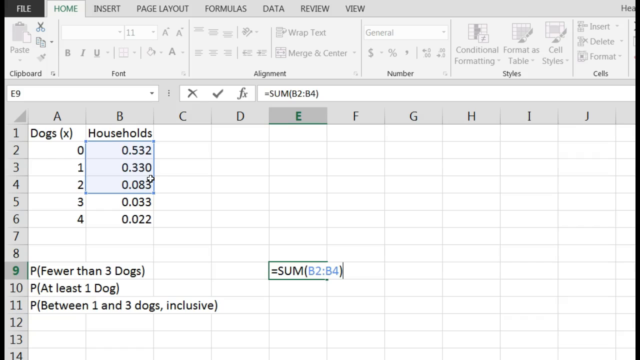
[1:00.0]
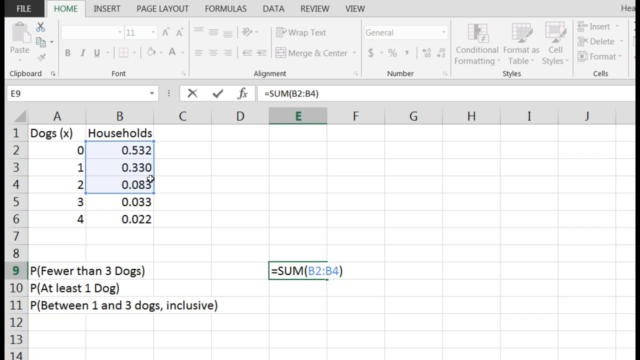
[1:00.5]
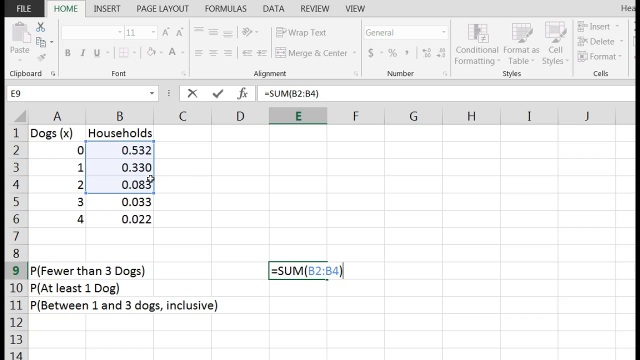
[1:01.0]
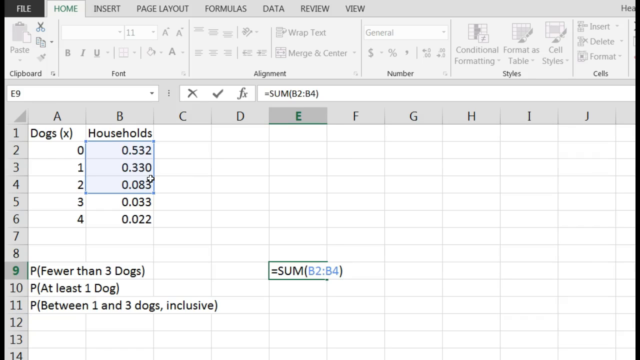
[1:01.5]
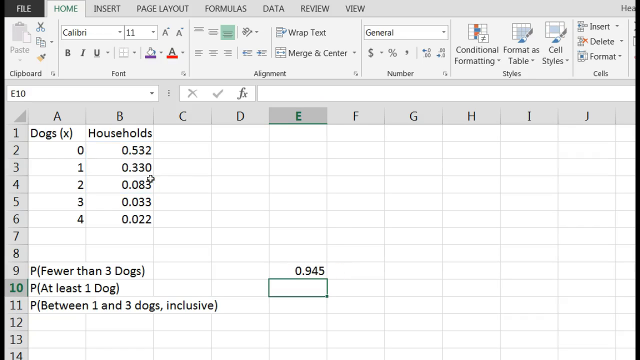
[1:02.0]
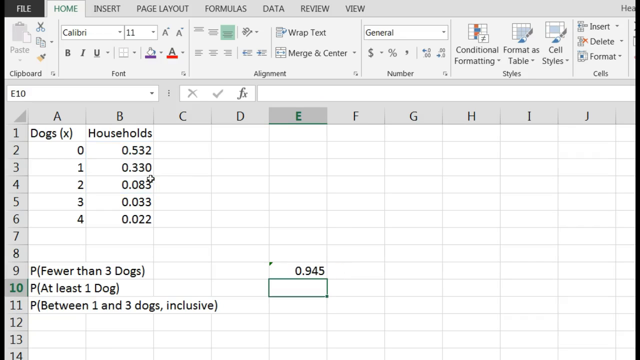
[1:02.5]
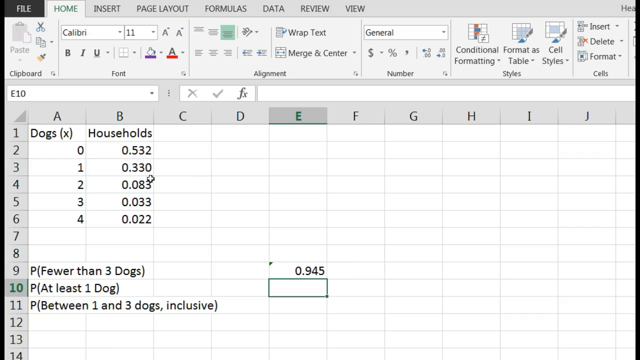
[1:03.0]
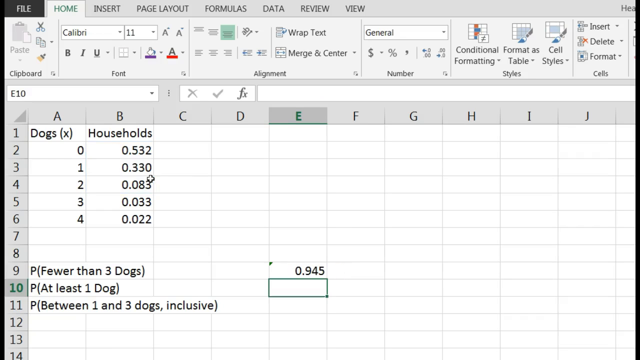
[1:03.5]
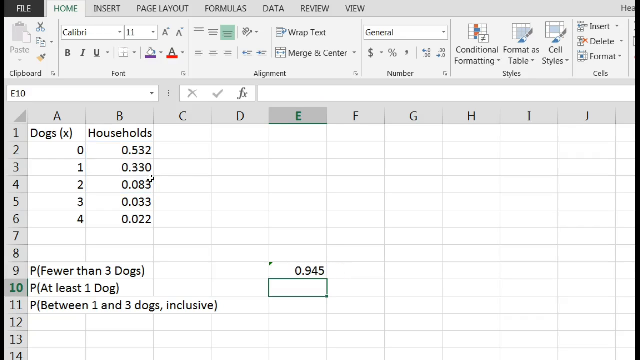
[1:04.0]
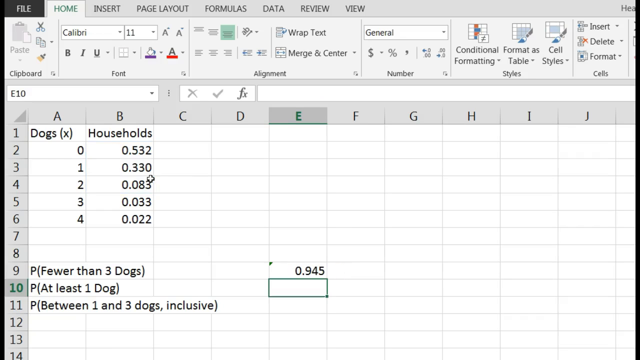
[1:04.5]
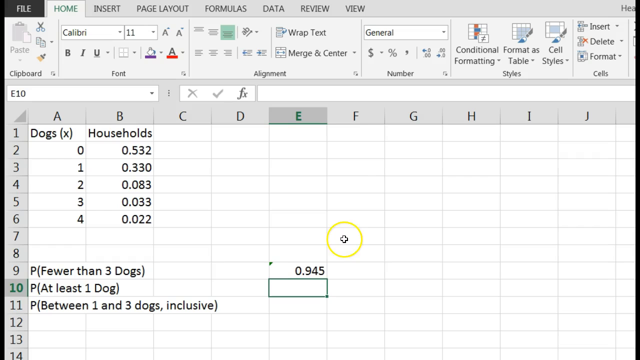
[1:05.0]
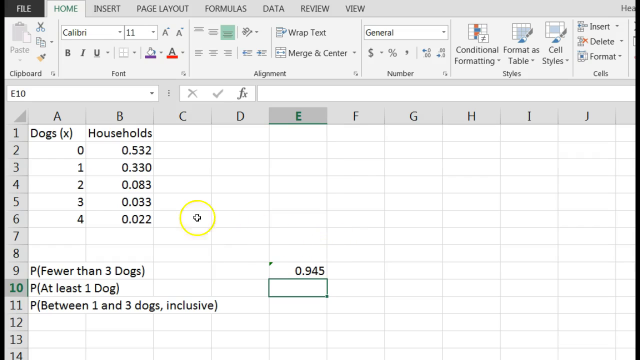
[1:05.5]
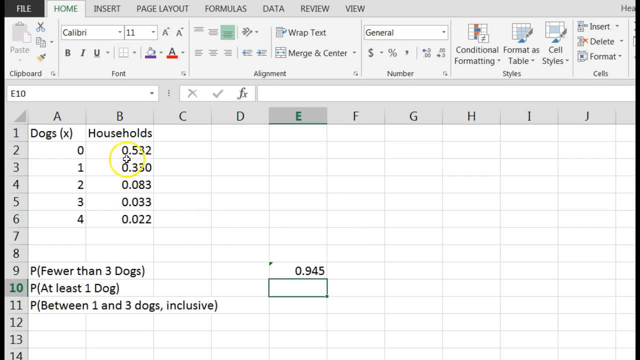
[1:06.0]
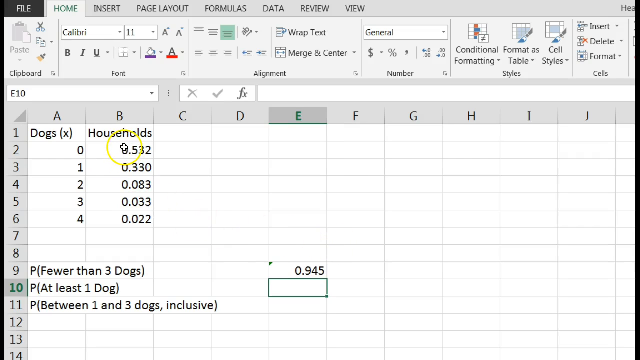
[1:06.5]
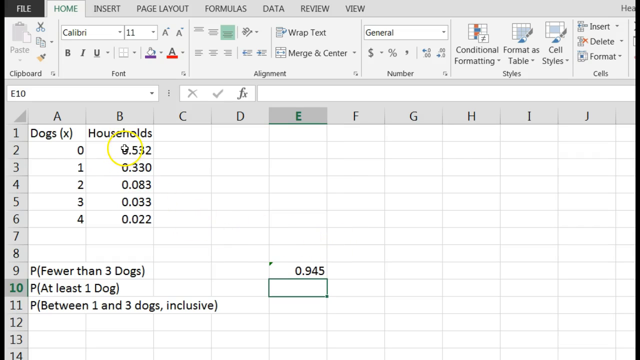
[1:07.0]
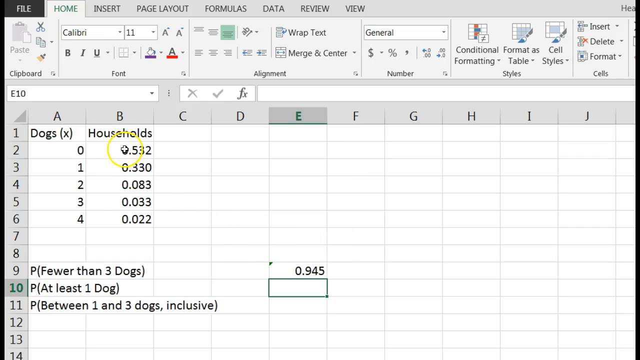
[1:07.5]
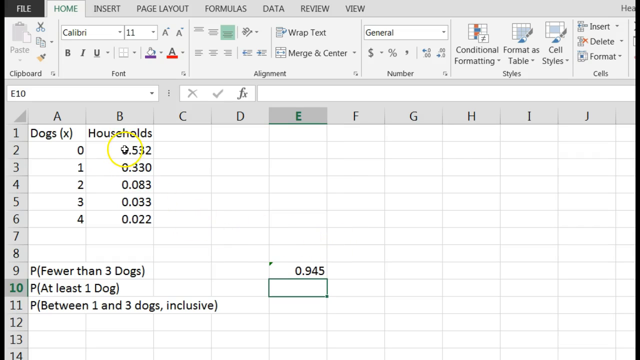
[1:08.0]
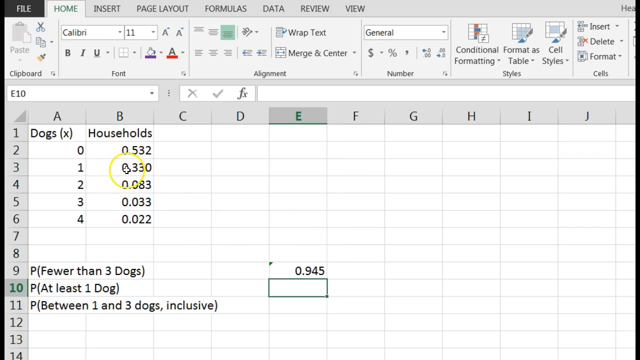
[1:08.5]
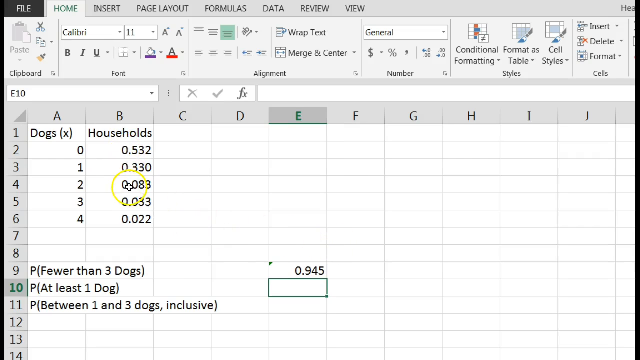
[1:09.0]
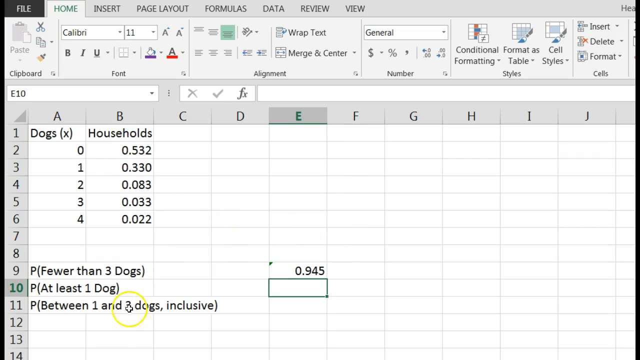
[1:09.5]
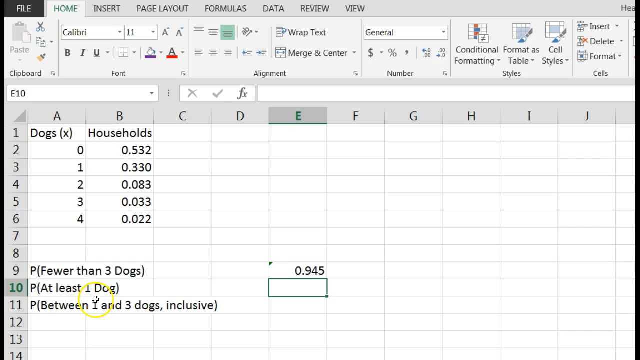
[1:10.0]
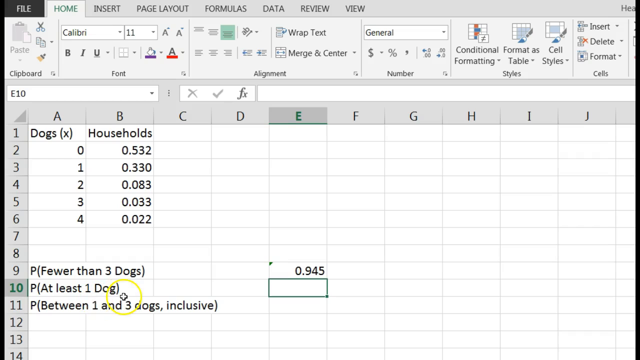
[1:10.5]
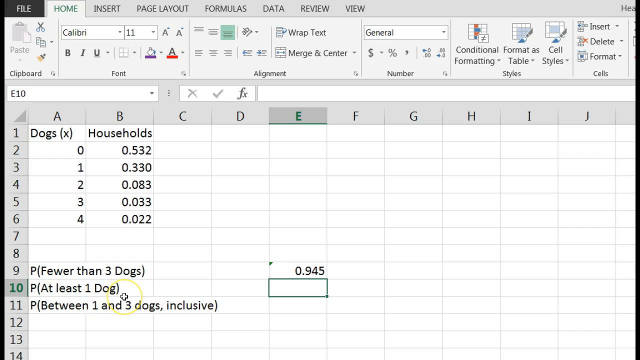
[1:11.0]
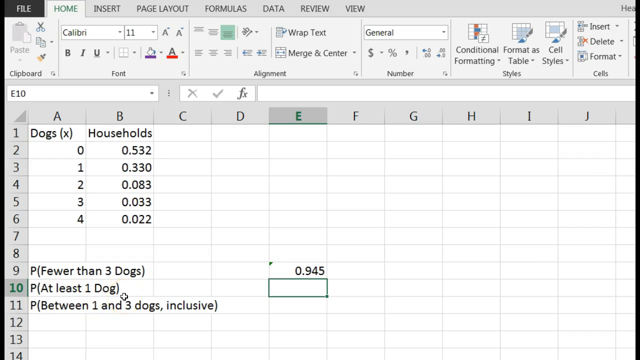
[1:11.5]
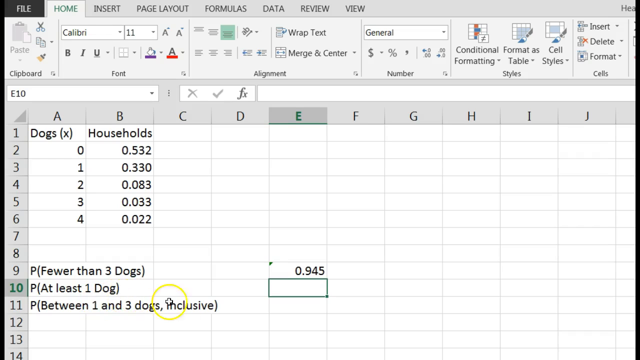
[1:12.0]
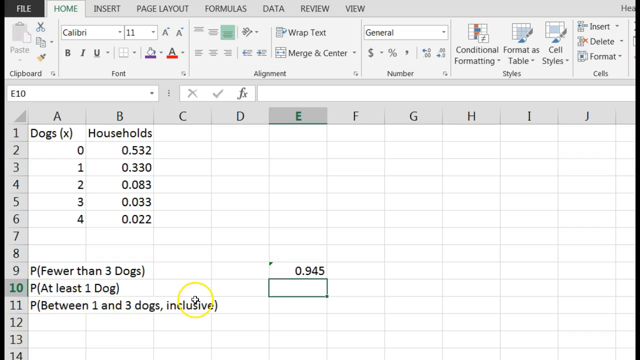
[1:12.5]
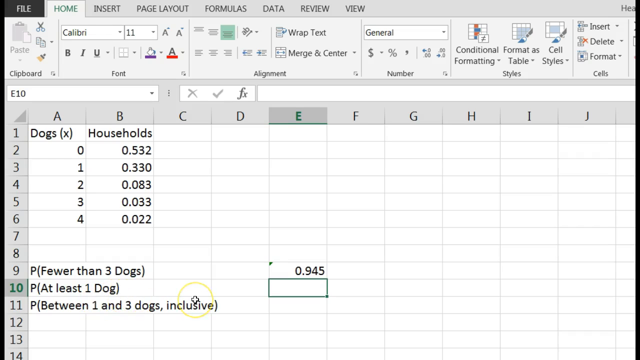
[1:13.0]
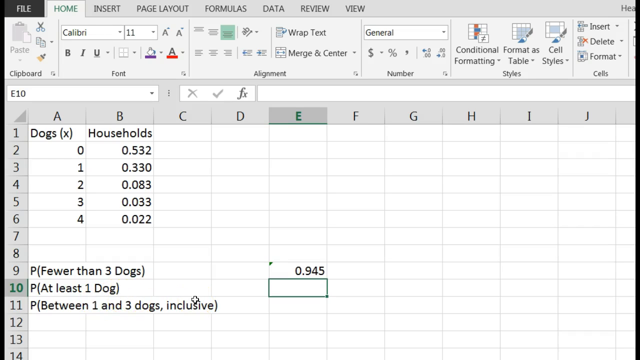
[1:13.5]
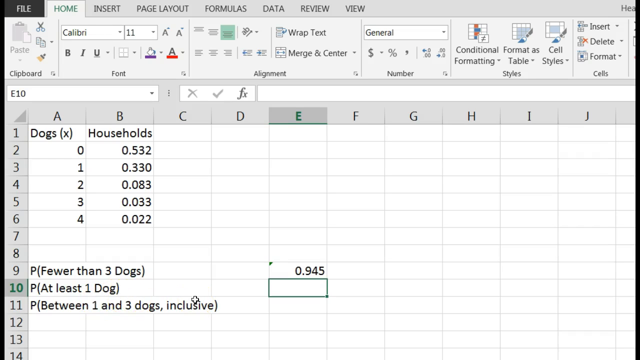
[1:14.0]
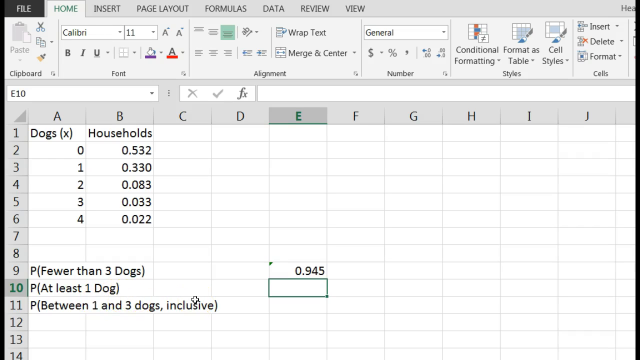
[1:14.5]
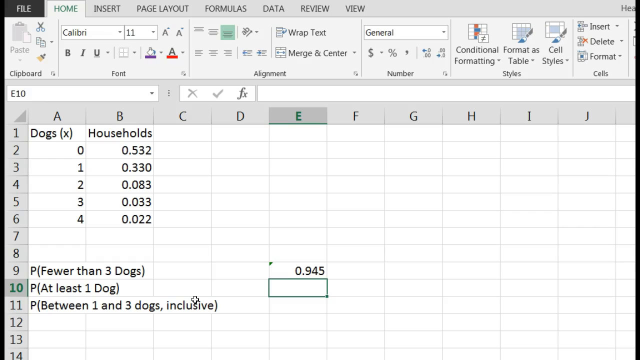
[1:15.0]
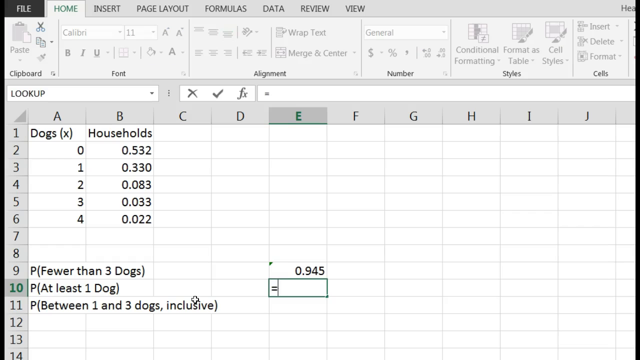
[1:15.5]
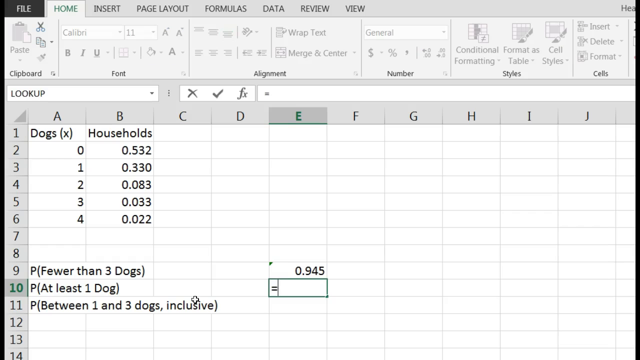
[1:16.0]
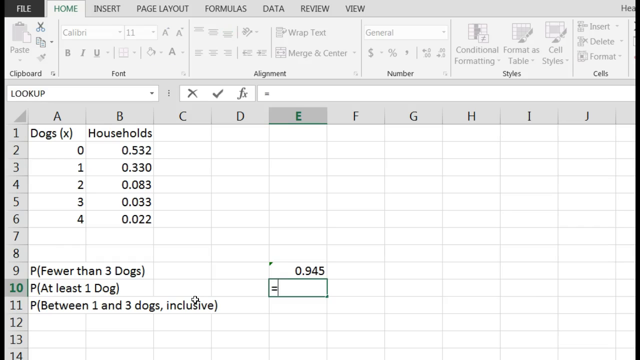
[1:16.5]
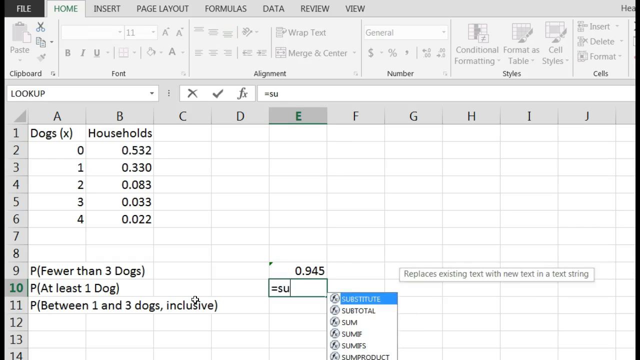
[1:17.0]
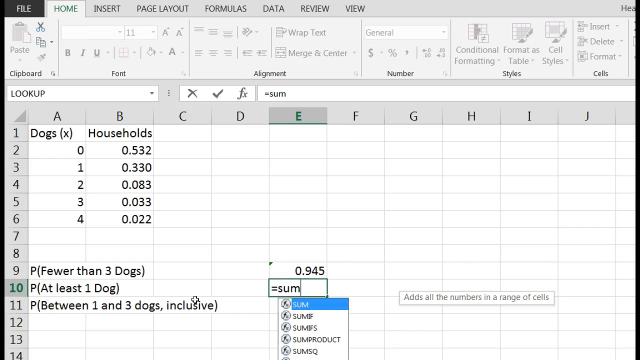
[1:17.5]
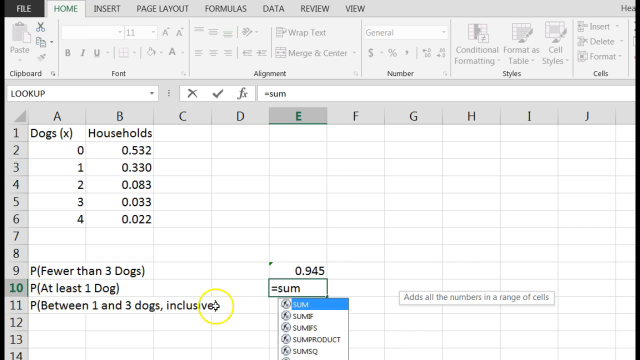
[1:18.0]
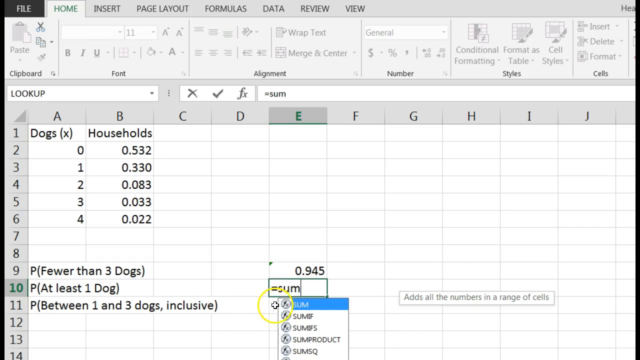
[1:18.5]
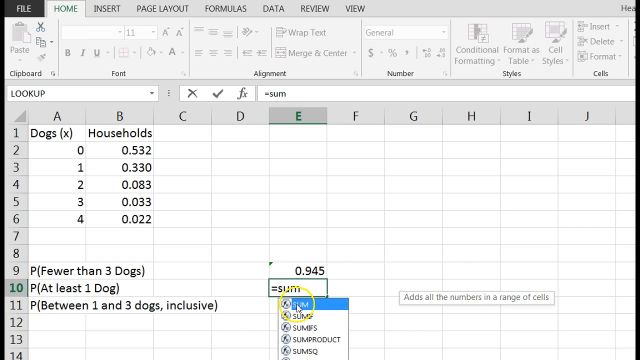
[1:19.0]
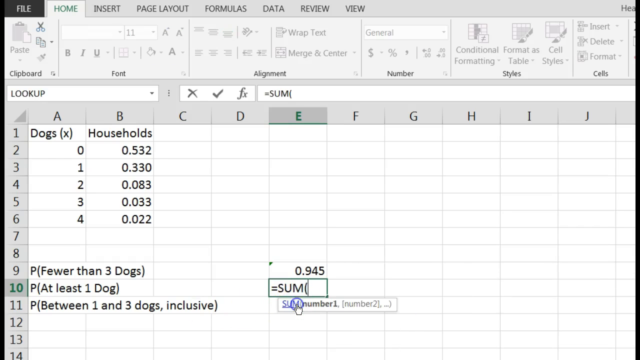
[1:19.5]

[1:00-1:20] As the cursor moves over the cells, they are highlighted with a blue border and a light blue fill, and the formula in E9 also shows blue: the word sum is in black followed by a parenthesis, and the cell references are in blue. When Enter is pressed, the references are replaced by a number: E9 now shows 0.945, apparently the sum. A small green triangle appears at the top left of E9. The cursor goes back up to B2 with a circle around it again and moves down the first three cells, B2 through B4, and then to row 10. The cell under 0.945 has a green border, and the E column header at the top and row 10 on the left are highlighted. A new function is started, with equals sum being typed.